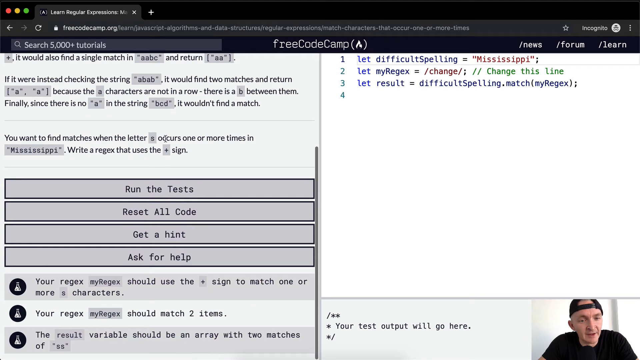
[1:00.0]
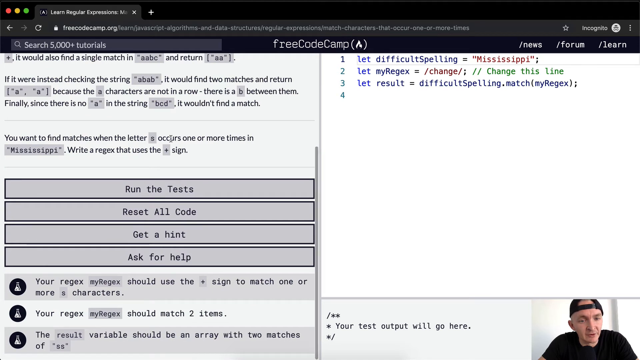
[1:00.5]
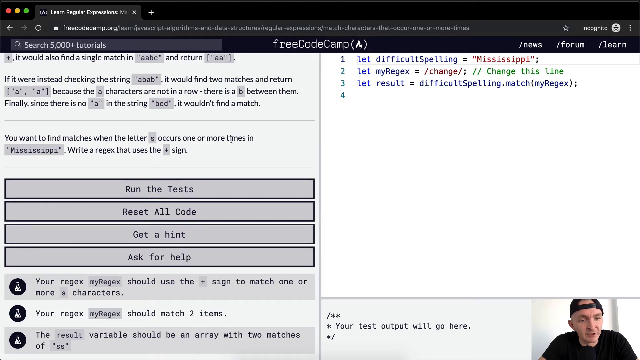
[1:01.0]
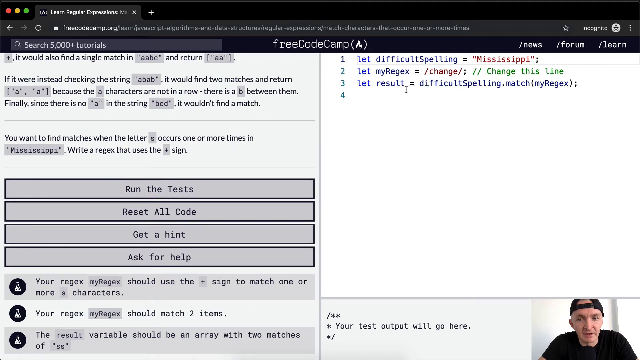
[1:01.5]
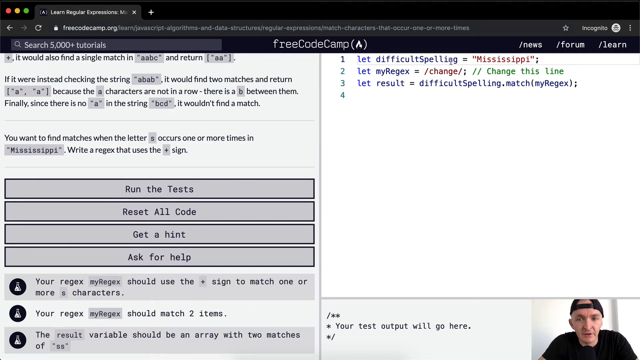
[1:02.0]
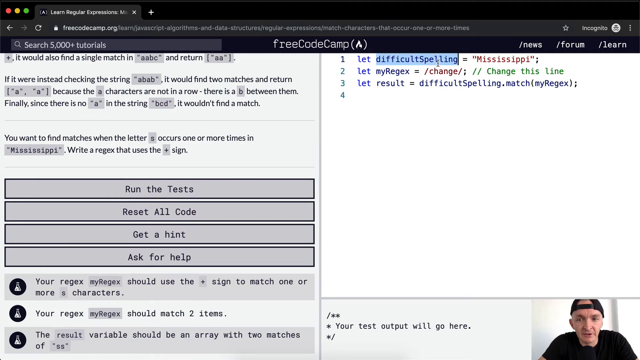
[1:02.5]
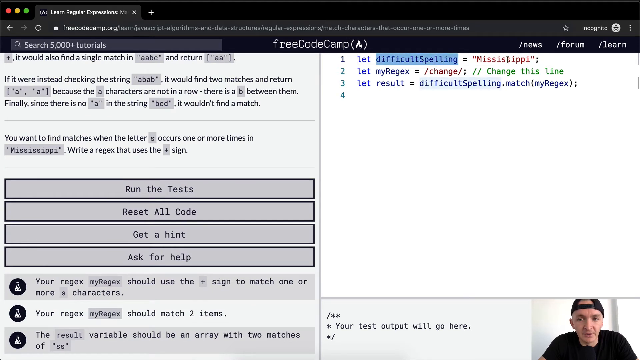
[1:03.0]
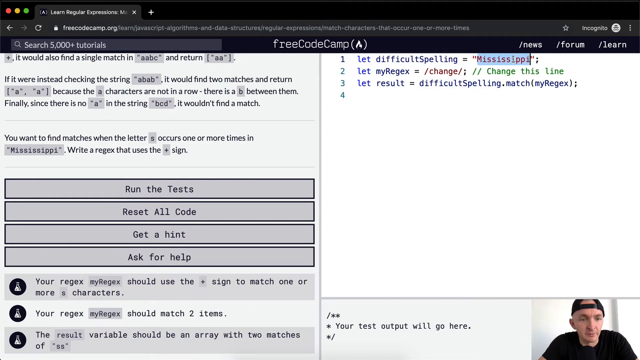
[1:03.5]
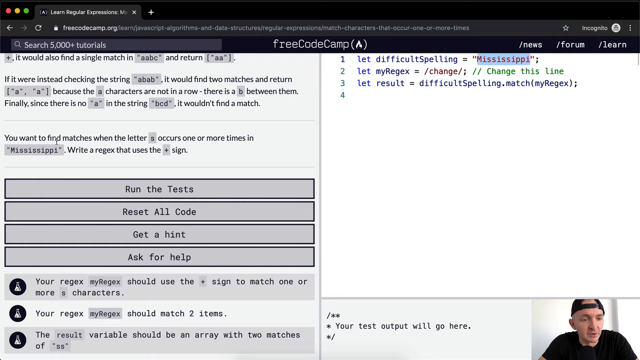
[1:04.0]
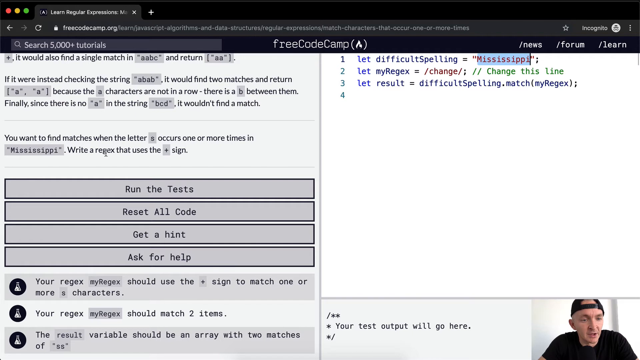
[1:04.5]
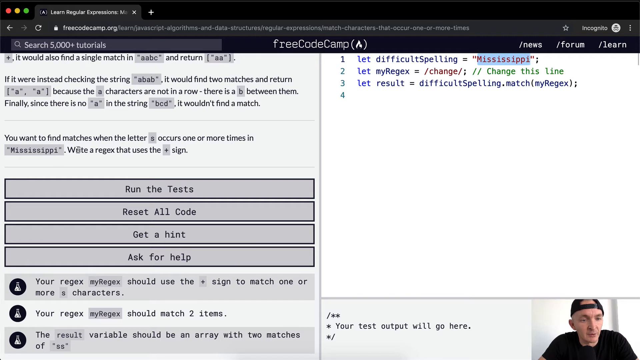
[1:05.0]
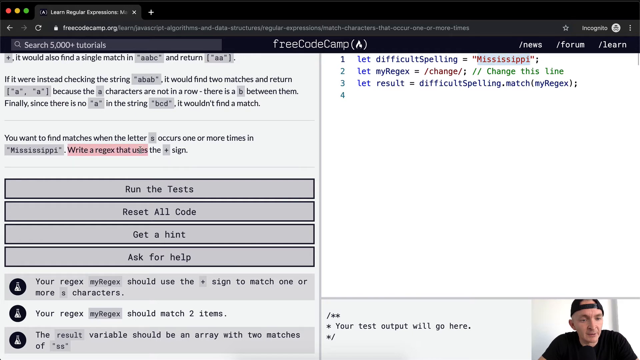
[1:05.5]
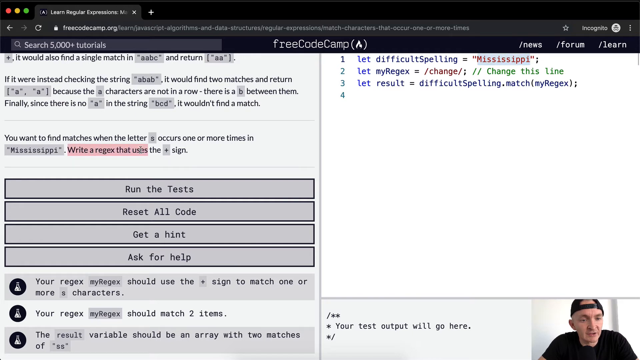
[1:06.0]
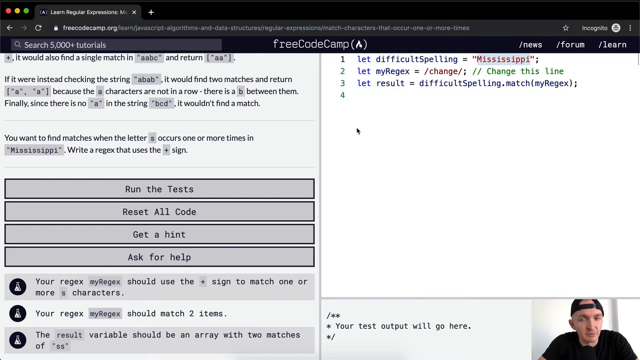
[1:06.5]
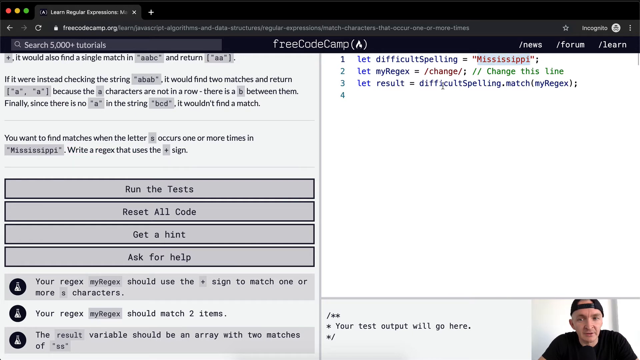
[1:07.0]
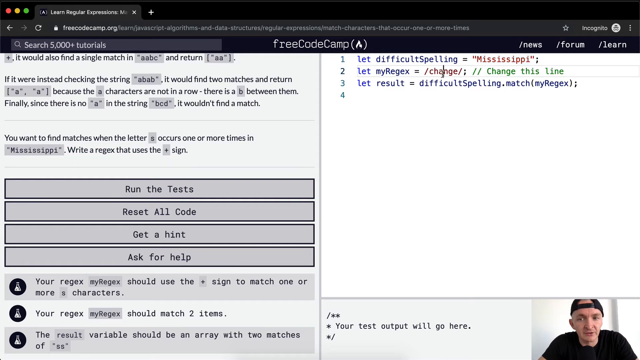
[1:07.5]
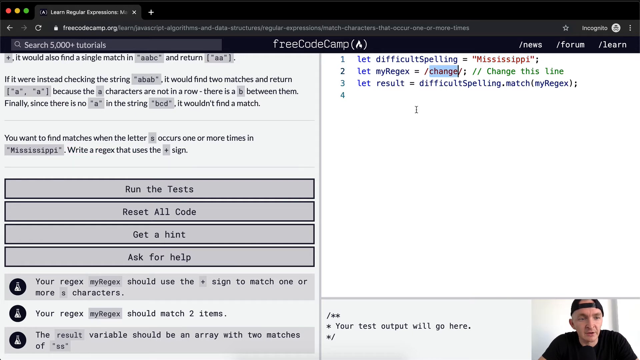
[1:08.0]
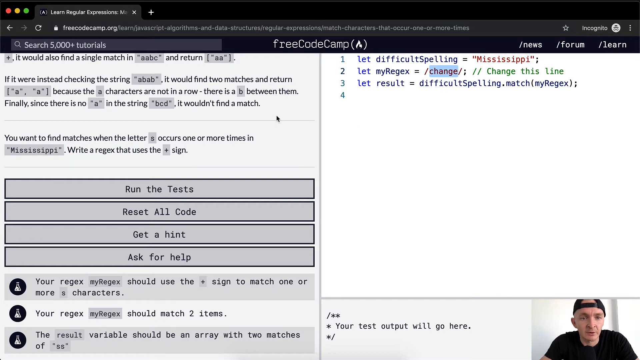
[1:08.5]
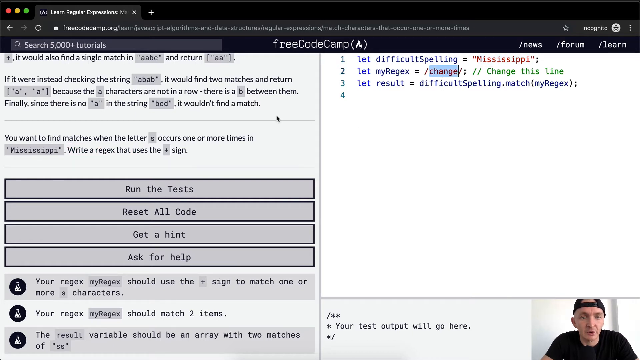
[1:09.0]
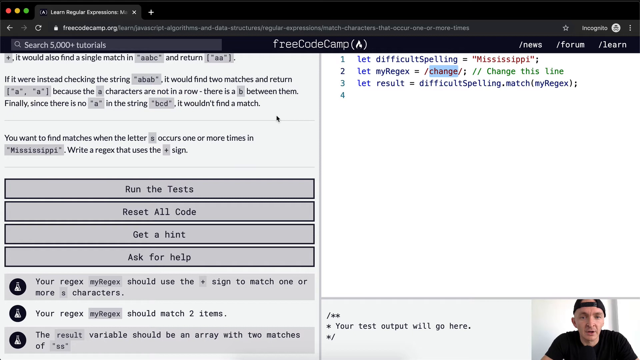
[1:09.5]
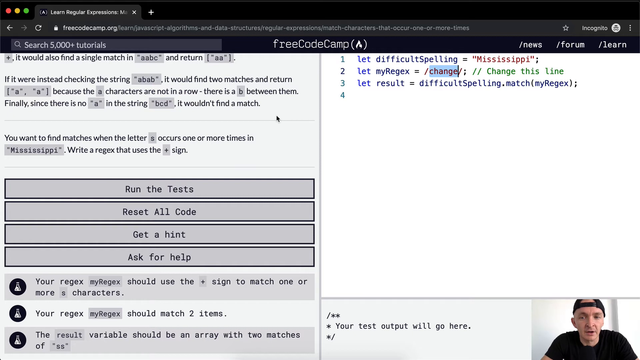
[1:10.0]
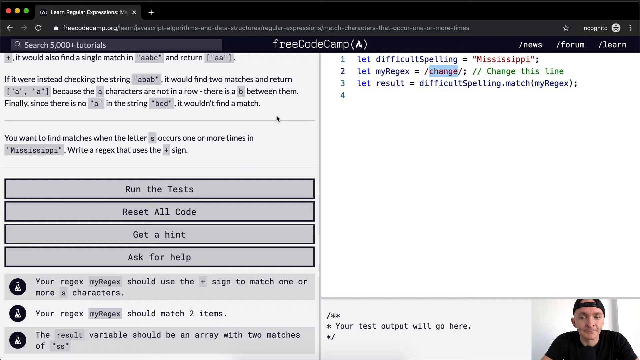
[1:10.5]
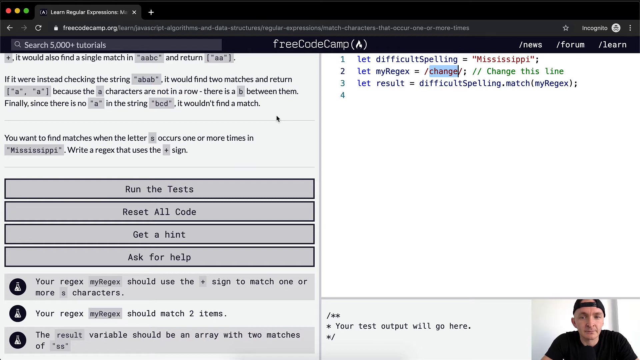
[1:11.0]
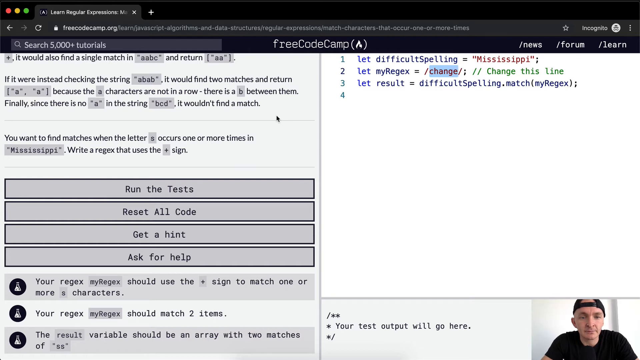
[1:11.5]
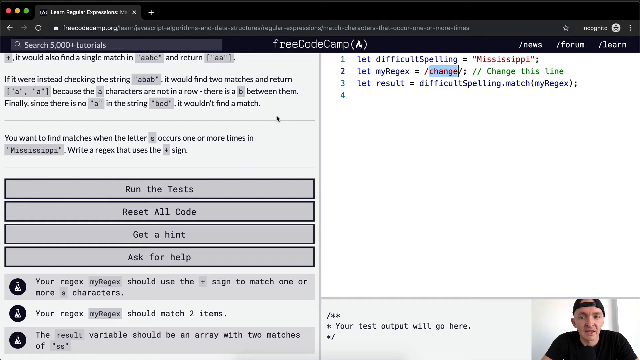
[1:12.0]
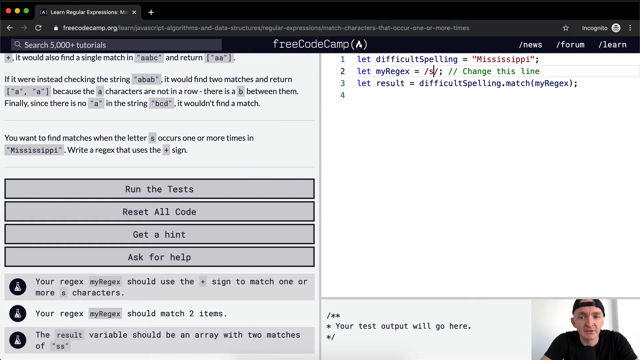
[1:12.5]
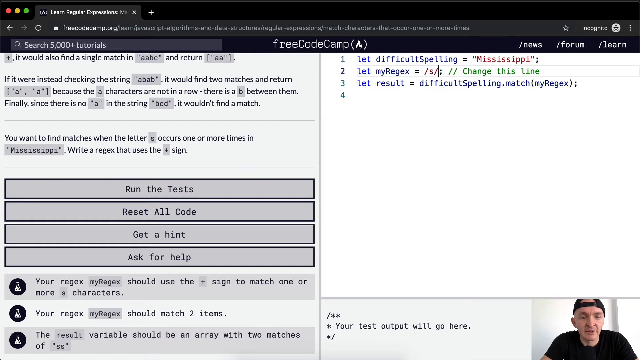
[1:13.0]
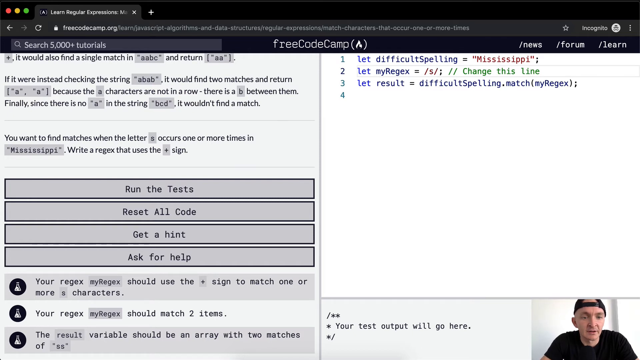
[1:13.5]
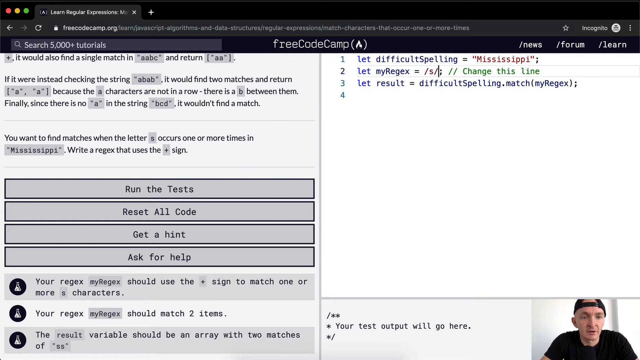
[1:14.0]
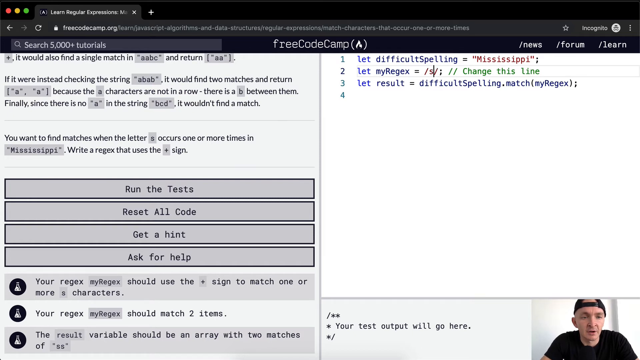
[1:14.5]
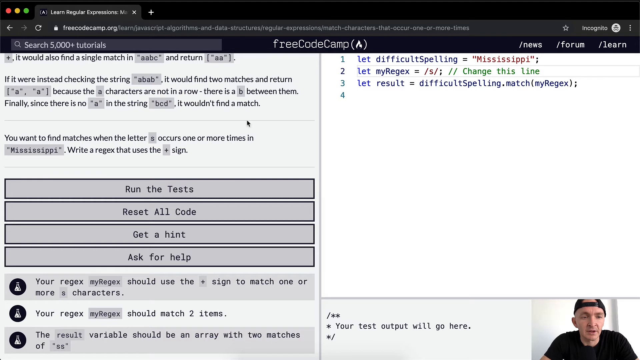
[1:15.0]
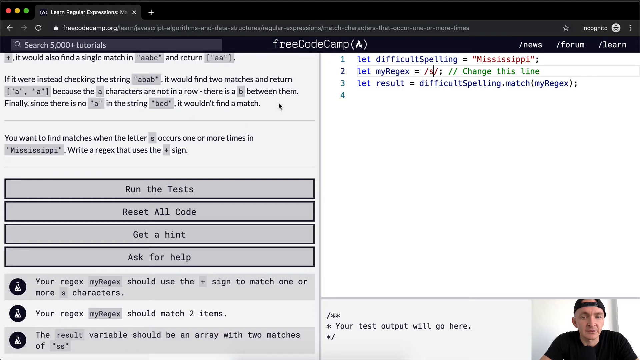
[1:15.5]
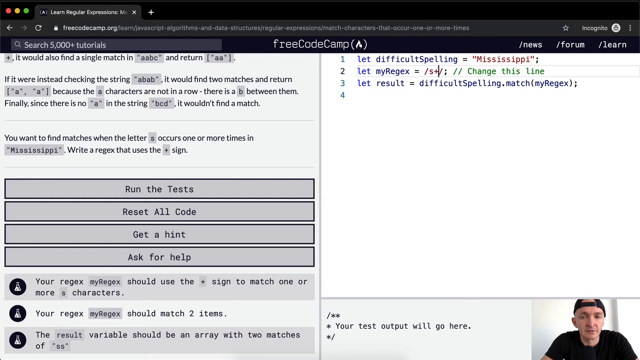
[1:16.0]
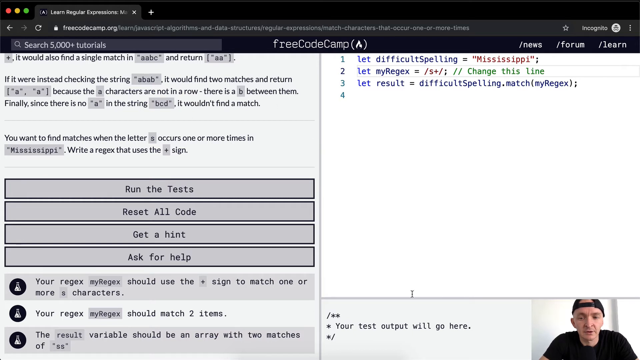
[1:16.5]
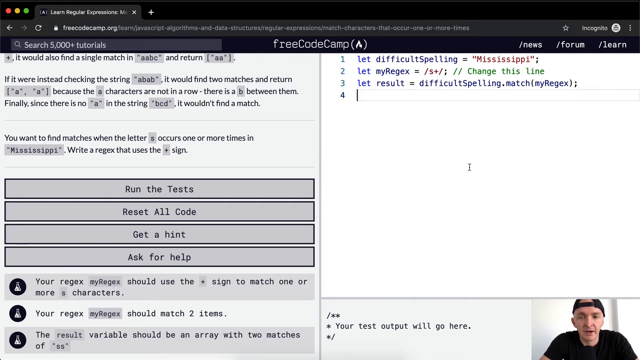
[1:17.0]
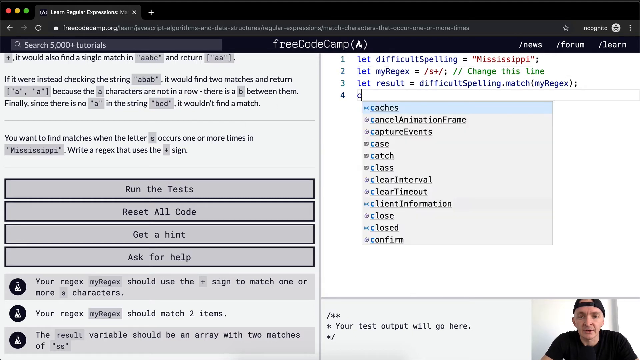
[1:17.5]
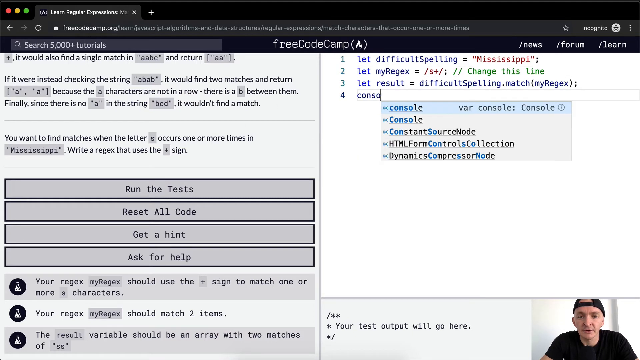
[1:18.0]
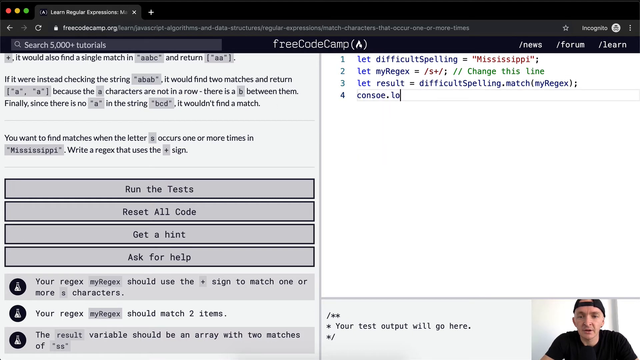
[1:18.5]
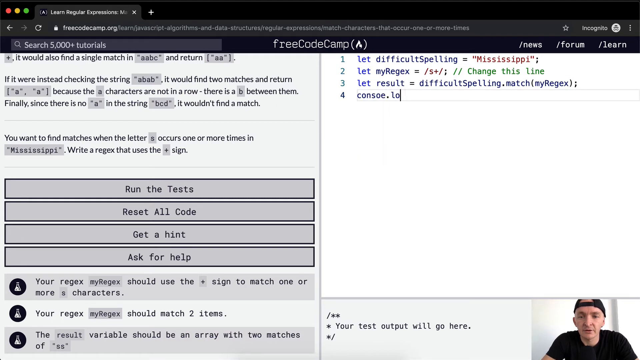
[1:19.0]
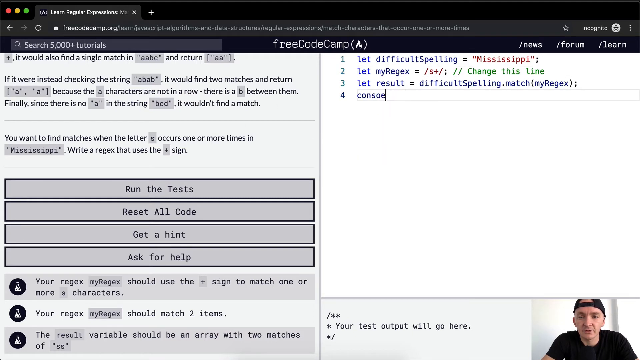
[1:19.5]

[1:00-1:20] An open tab for "Learn Regular Expressions" is shown, with "Free Code Camp" at the top and a search bar. The white screen is split down the middle, with instructions on the left and a work window on the right. The author's mouse is on the left side. As he talks, he moves his mouse along, highlighting code in the work pane on the right and highlighting the matching instructions on the left. A live feed of the narrator appears in the bottom right corner; he wears a black t-shirt and a black ball cap turned backwards. He moves the mouse and cursor carefully to point out exactly what he is talking about, step by step.